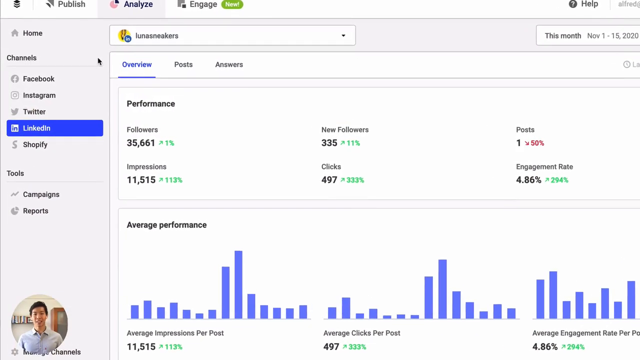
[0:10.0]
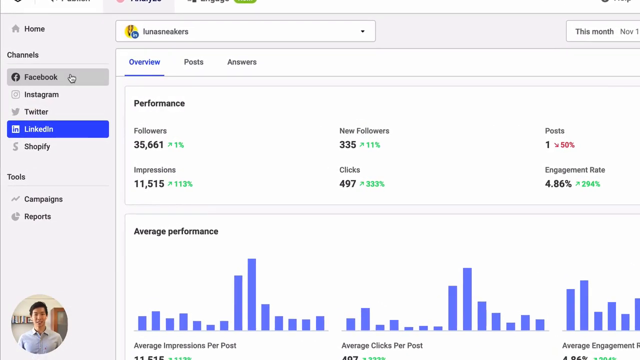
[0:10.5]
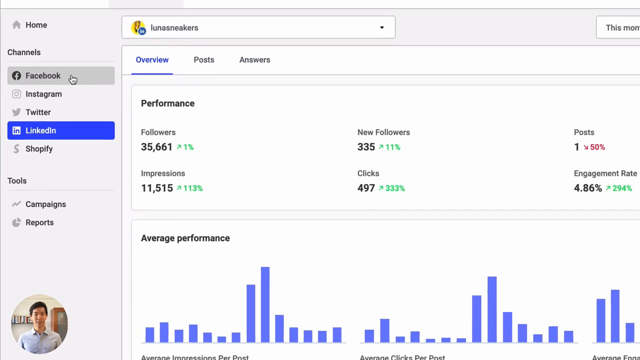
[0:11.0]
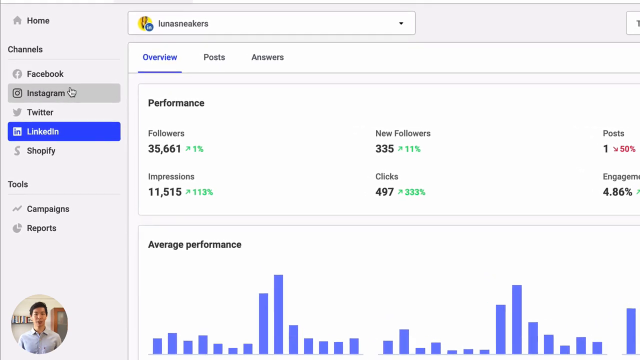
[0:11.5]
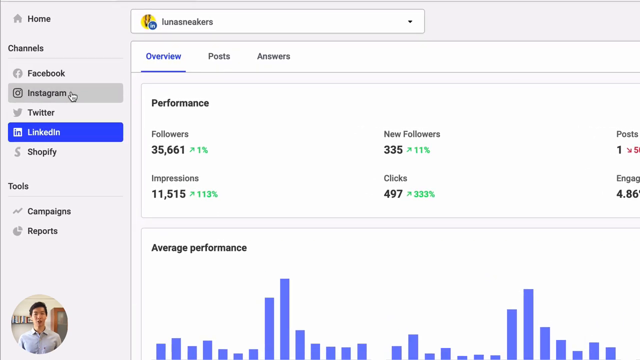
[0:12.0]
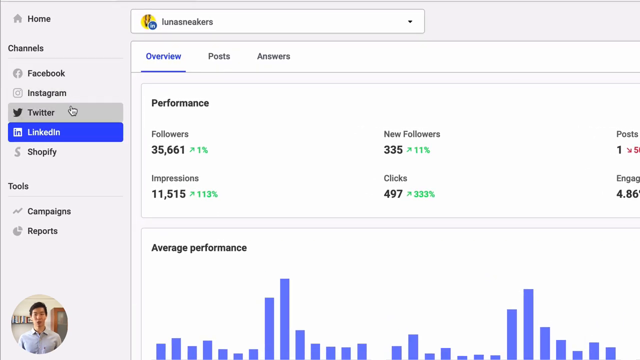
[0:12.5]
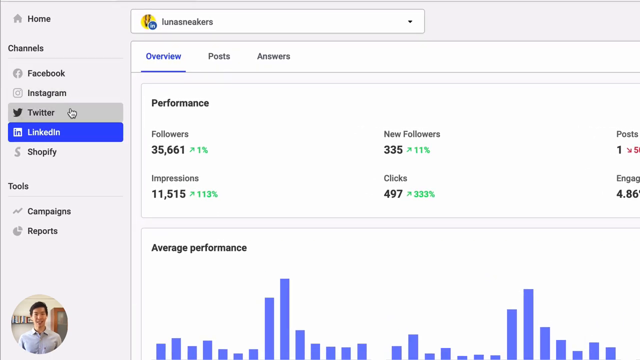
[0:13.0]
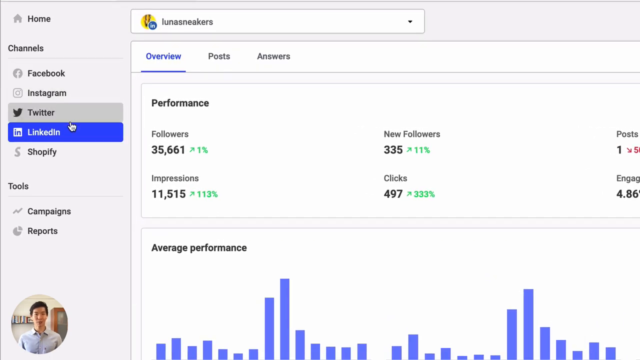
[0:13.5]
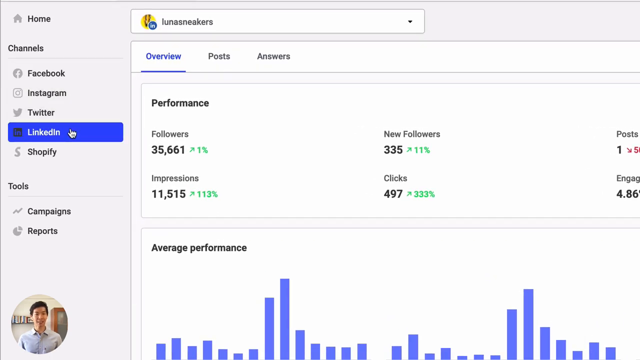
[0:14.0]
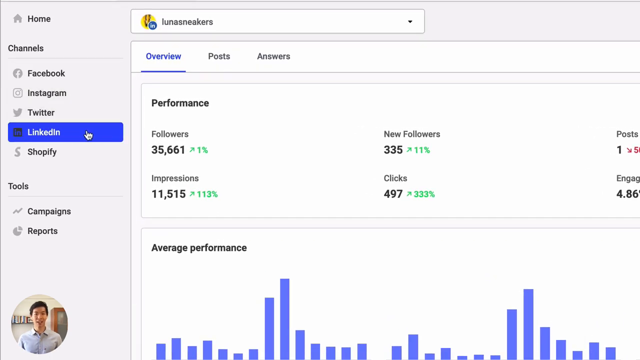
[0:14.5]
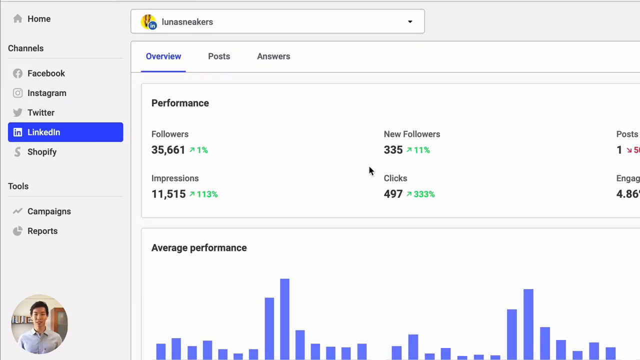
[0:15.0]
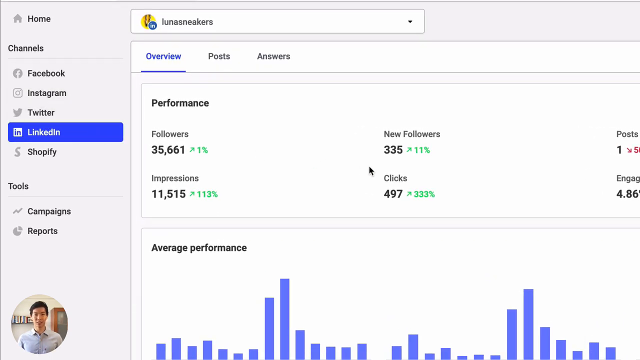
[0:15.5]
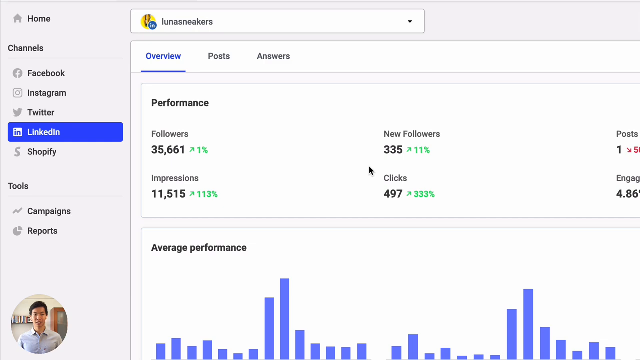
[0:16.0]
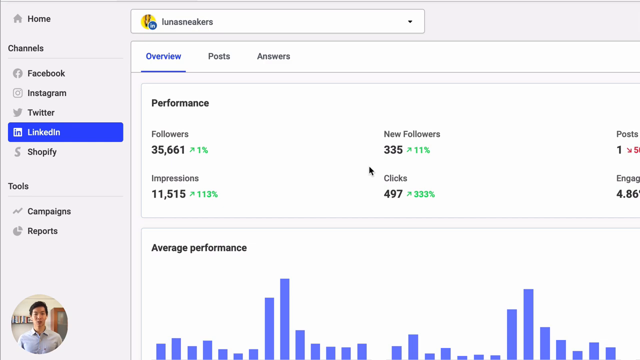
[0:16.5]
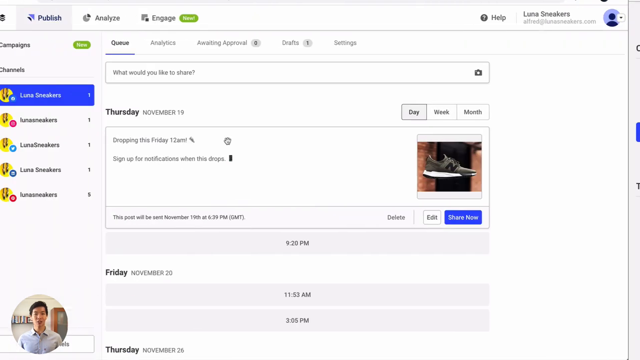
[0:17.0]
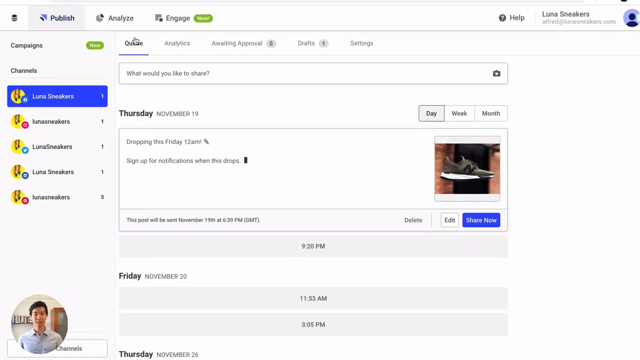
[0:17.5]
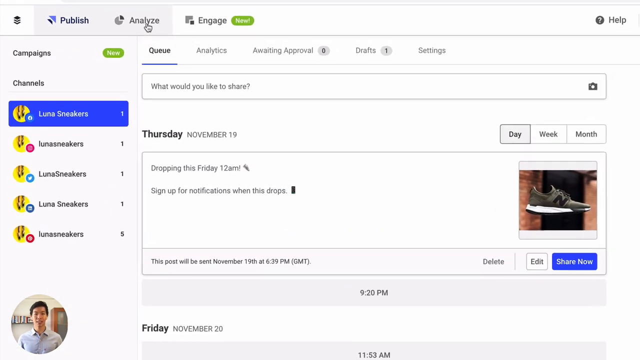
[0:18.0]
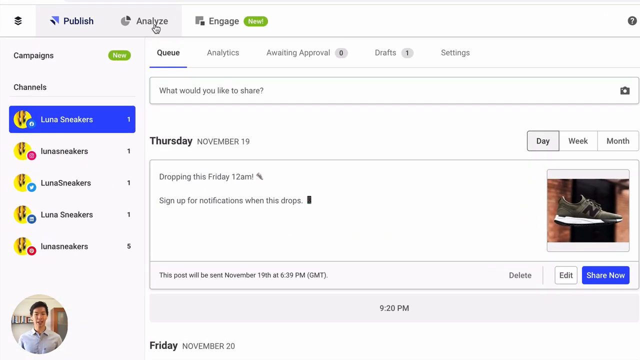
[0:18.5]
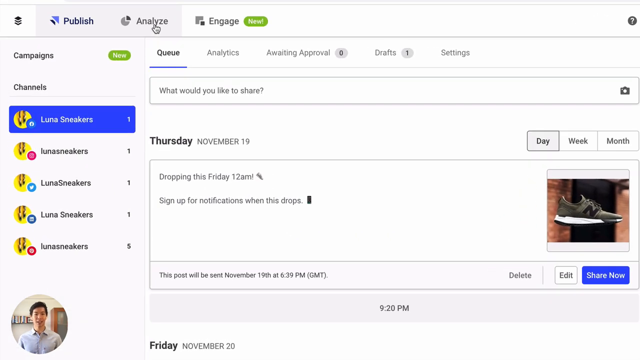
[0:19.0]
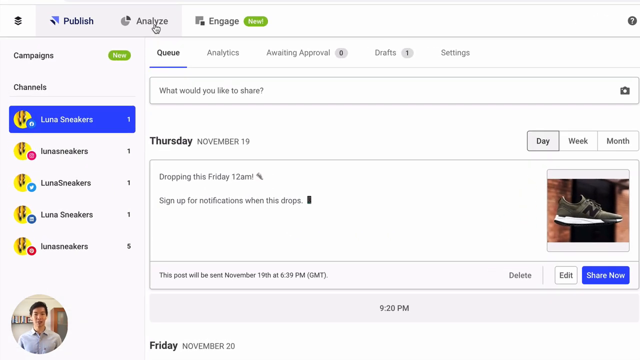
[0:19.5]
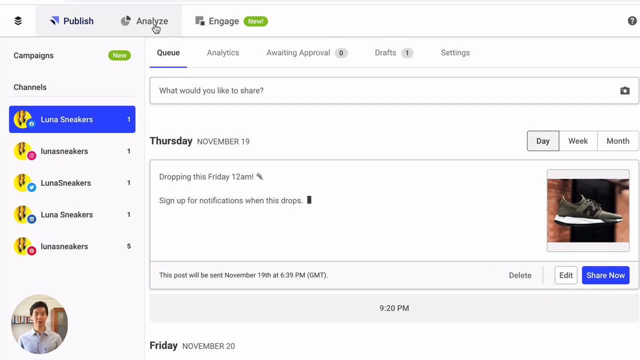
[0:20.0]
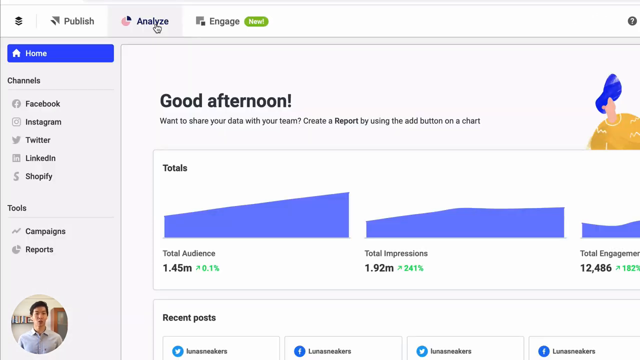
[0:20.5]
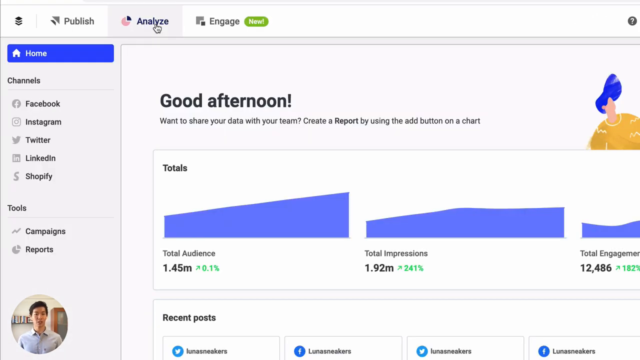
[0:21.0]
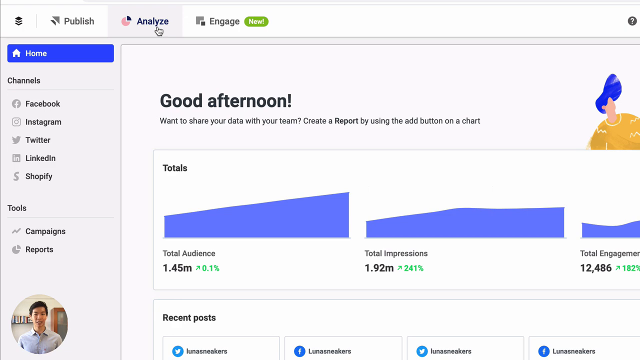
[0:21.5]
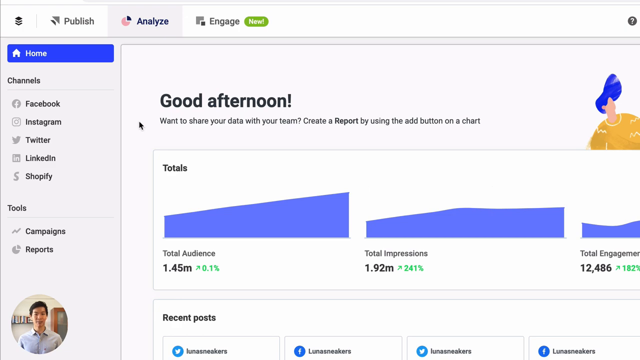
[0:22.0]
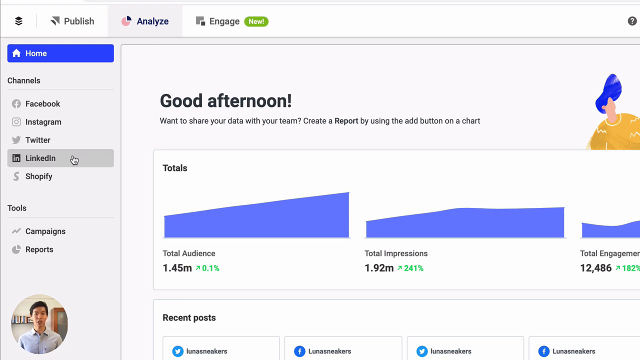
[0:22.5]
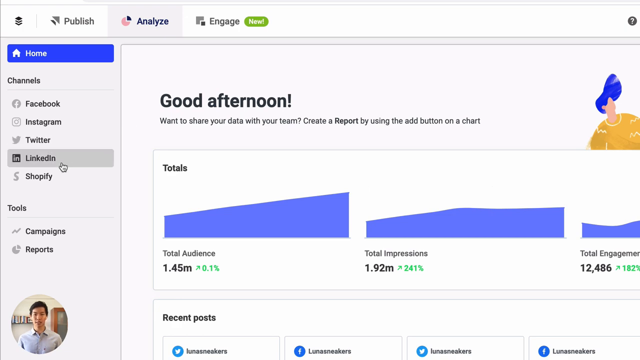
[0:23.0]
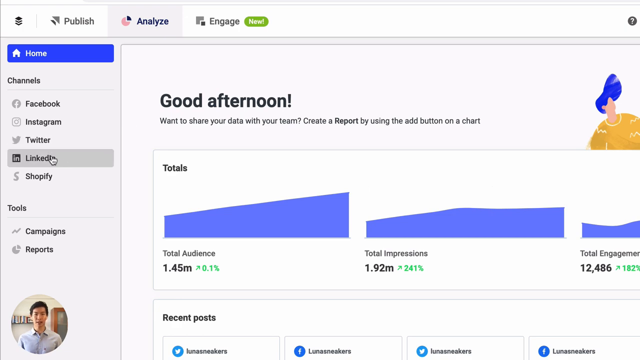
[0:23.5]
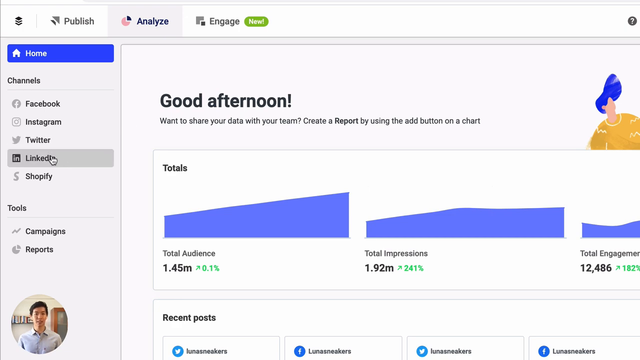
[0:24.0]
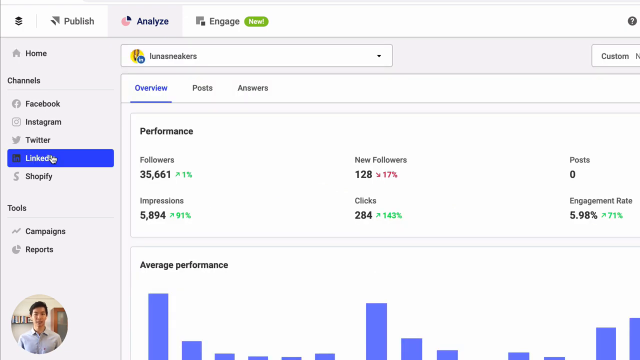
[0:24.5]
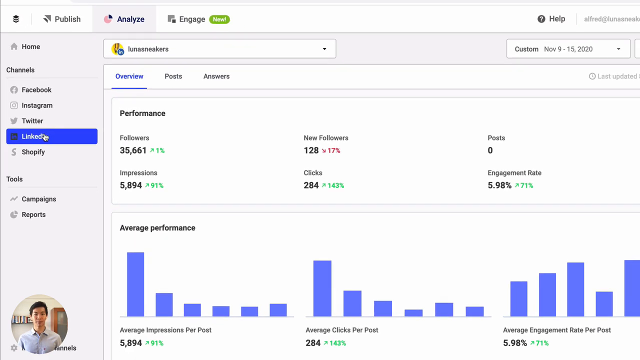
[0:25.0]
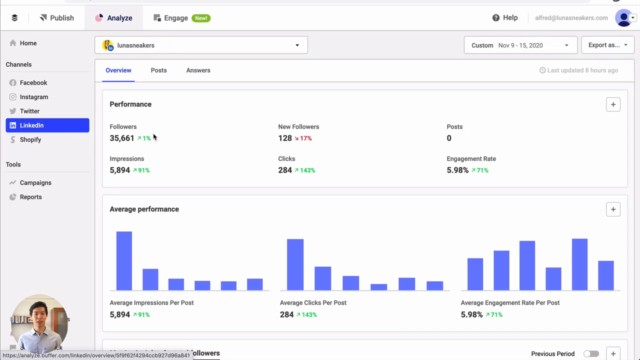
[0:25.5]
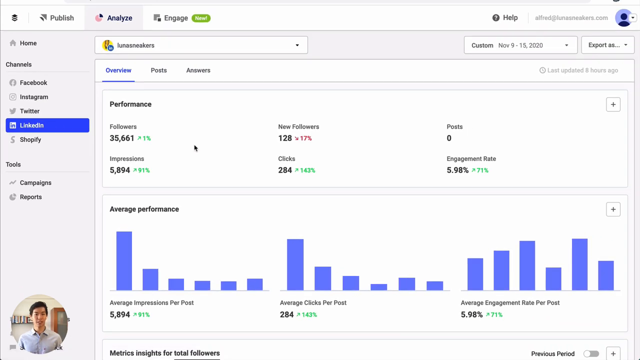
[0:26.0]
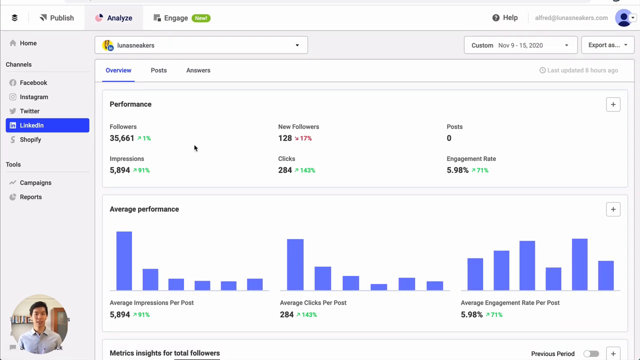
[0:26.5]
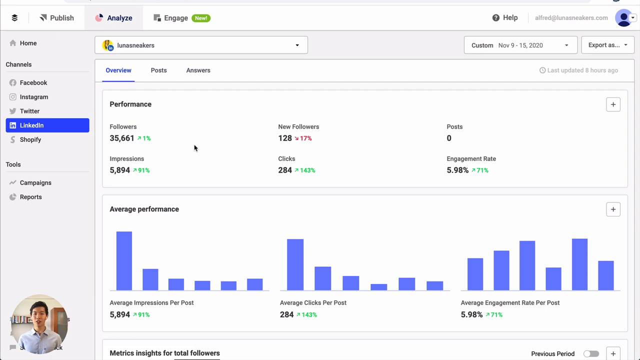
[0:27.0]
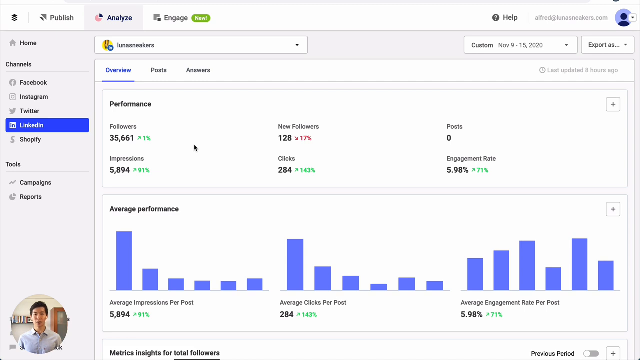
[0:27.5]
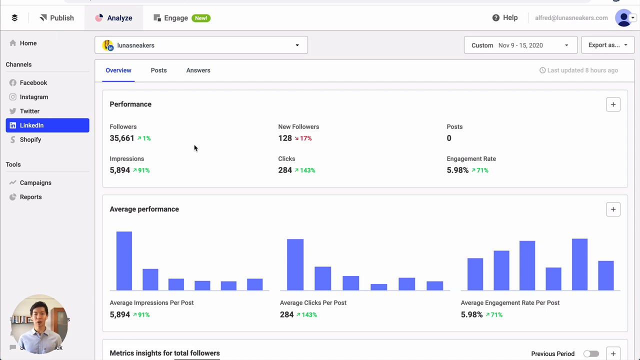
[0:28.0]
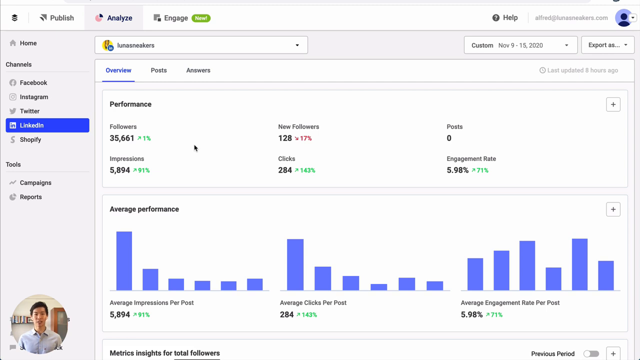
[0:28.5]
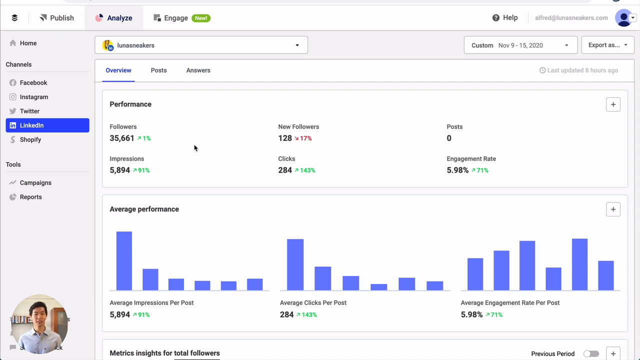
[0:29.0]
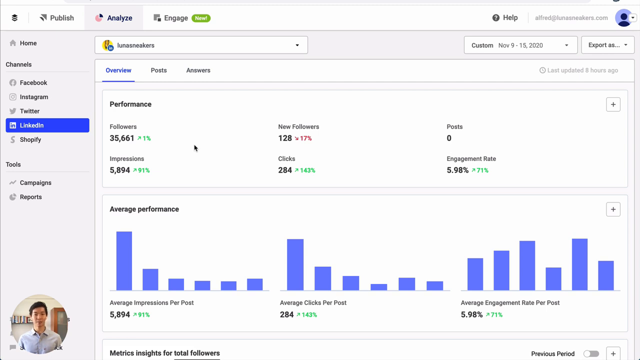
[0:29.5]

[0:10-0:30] The man now appears in a circle crop in the very bottom left corner while the analytics are shown. On the left are a number of tabs: home, then channels for Facebook, Instagram, Twitter, LinkedIn and Shopify, and below that a tools section with campaigns and reports. The main body is an overview of analytics showing performance, average performance and more. Along the very top are publish, analyze and engage, with analyze currently selected. The software is light gray and white, with important information highlighted in blue and occasional green and red, in tiny numbers and lettering. The screen zooms in on the left side as the mouse hand hovers over multiple sections. After zooming in on LinkedIn, the page switches and transitions to publish, and the mouse then clicks on analyze. Back on the home page, the mouse clicks on LinkedIn again.